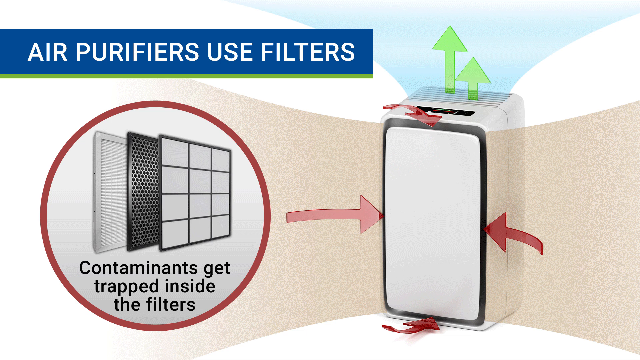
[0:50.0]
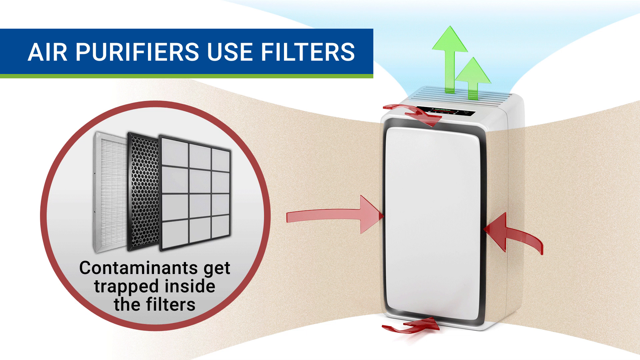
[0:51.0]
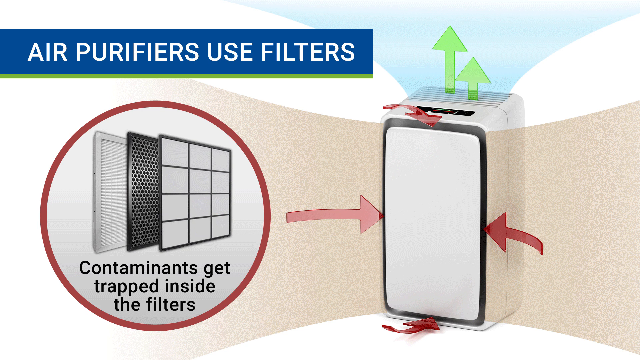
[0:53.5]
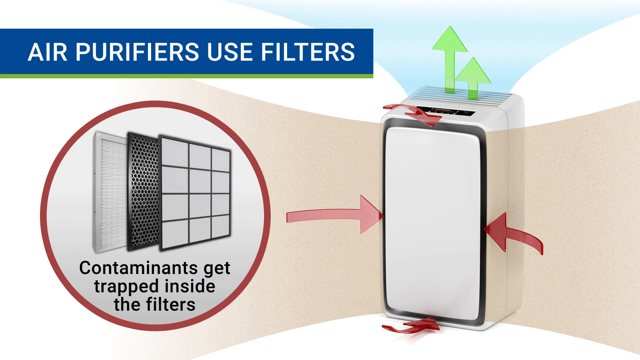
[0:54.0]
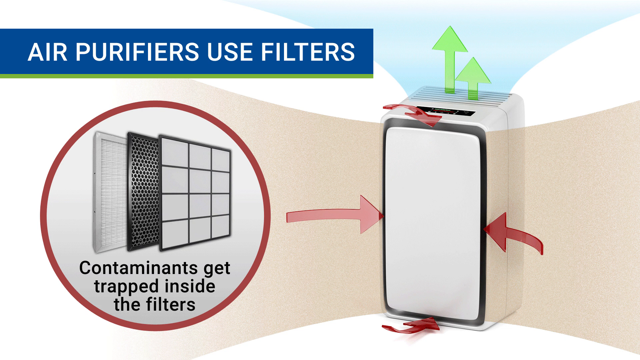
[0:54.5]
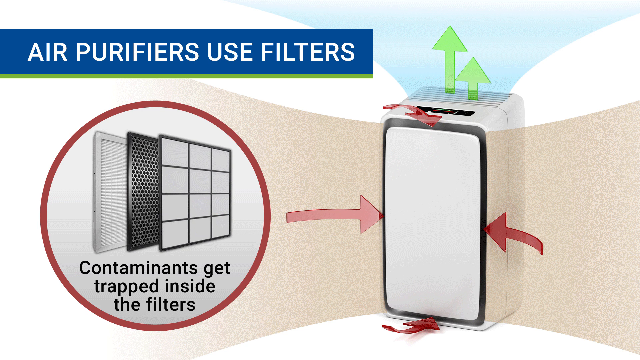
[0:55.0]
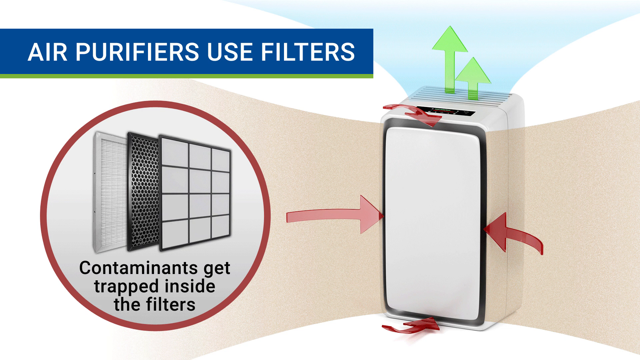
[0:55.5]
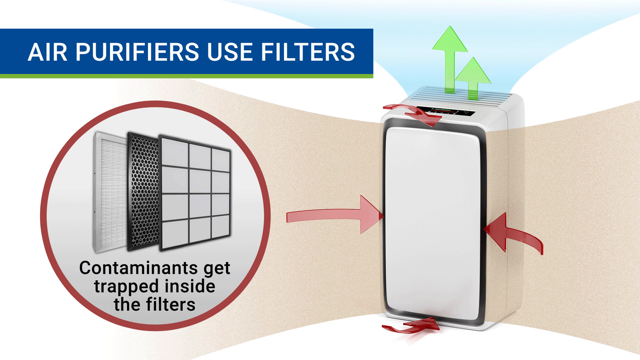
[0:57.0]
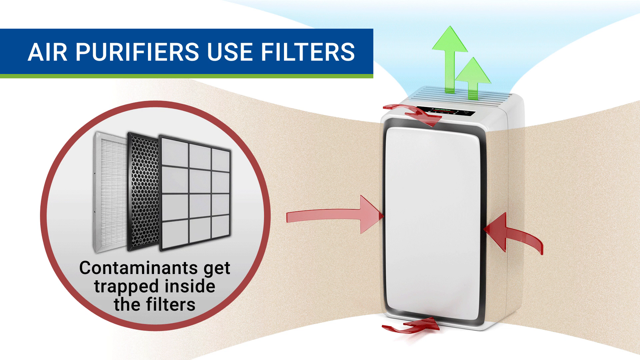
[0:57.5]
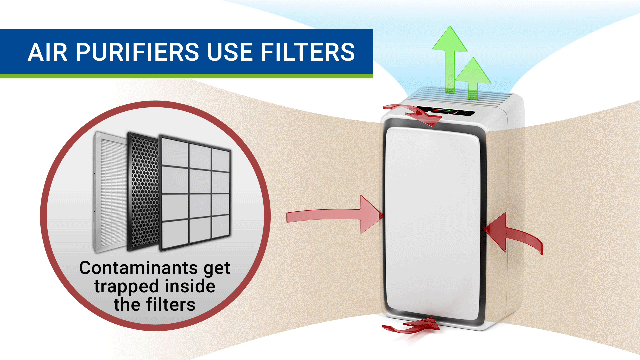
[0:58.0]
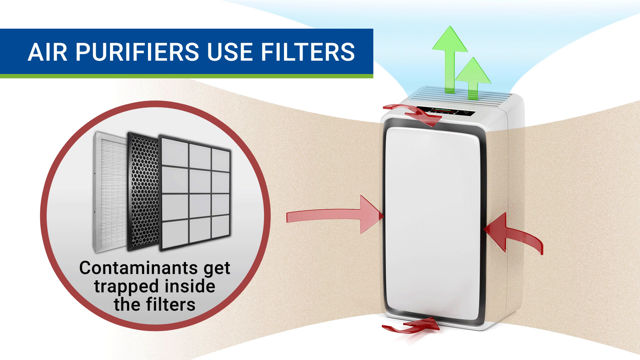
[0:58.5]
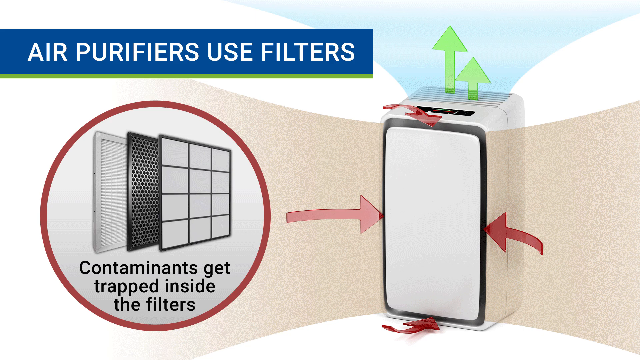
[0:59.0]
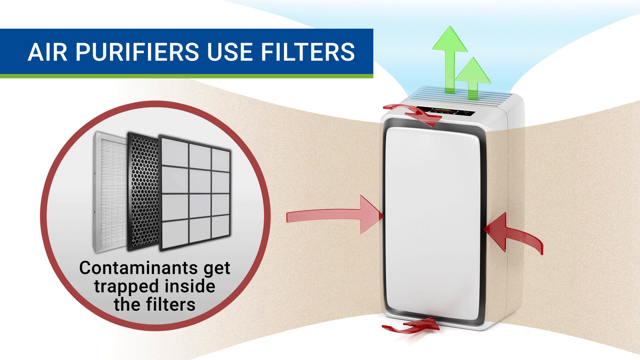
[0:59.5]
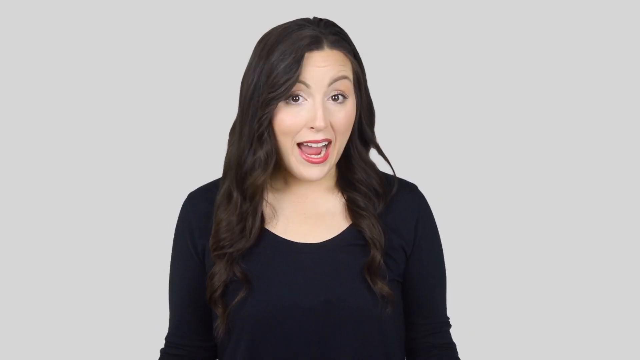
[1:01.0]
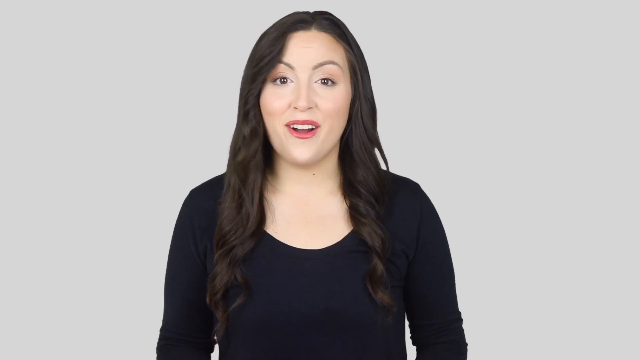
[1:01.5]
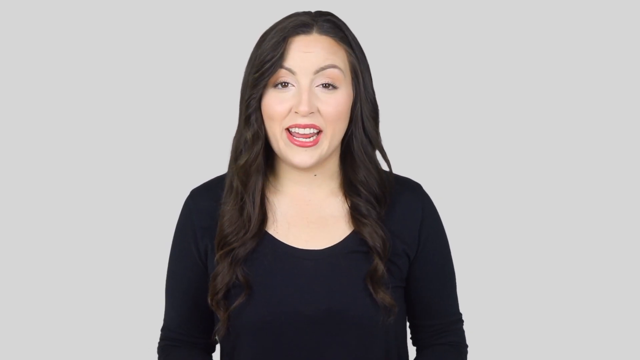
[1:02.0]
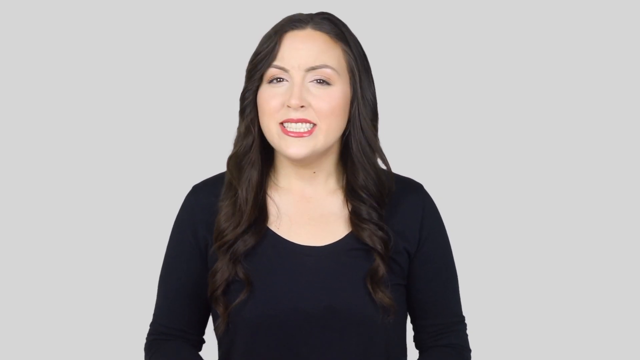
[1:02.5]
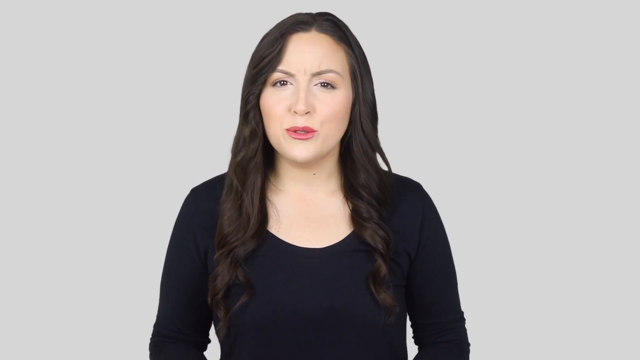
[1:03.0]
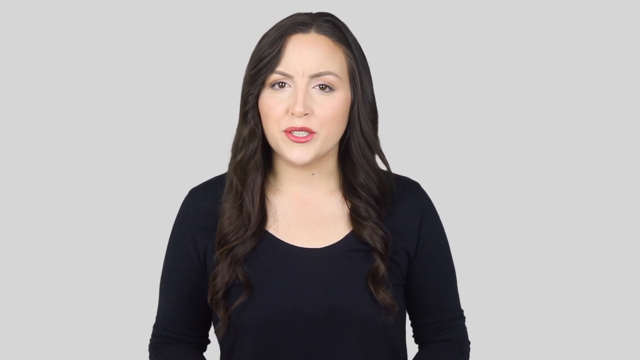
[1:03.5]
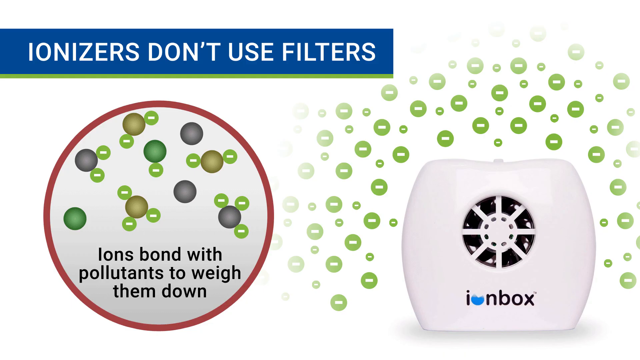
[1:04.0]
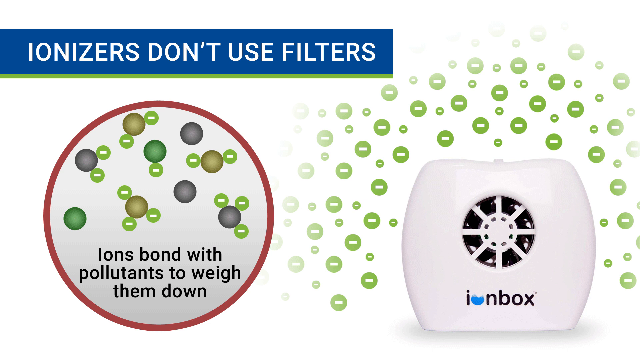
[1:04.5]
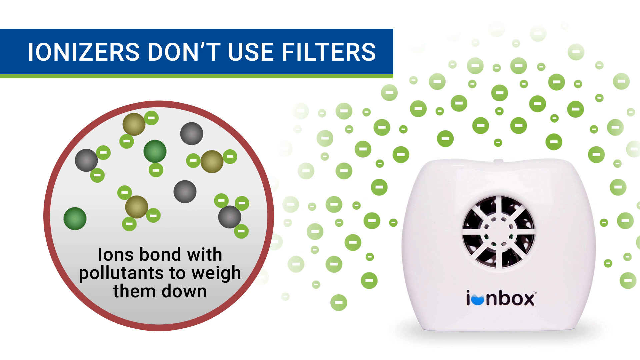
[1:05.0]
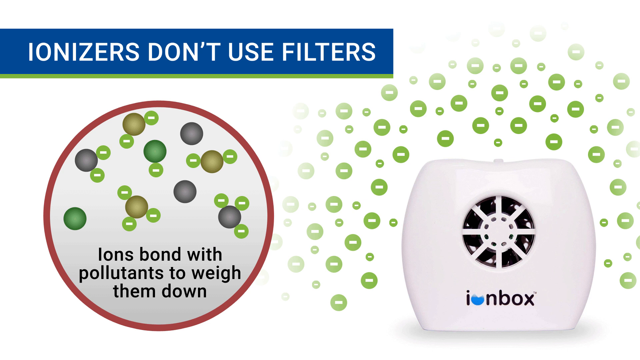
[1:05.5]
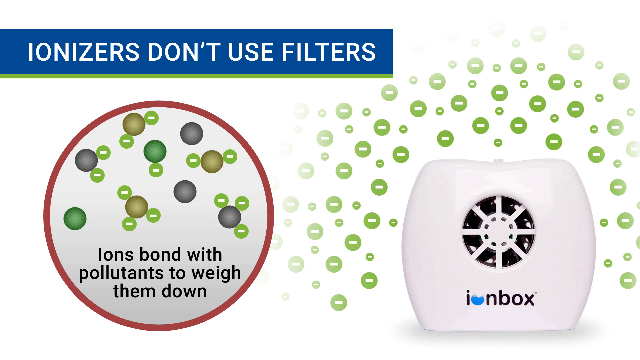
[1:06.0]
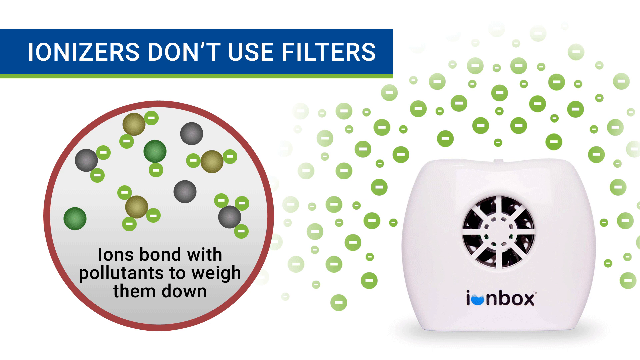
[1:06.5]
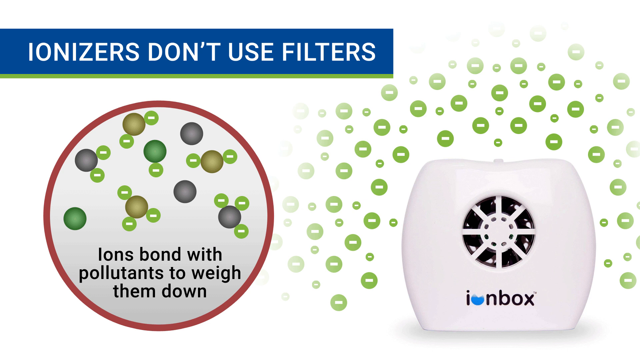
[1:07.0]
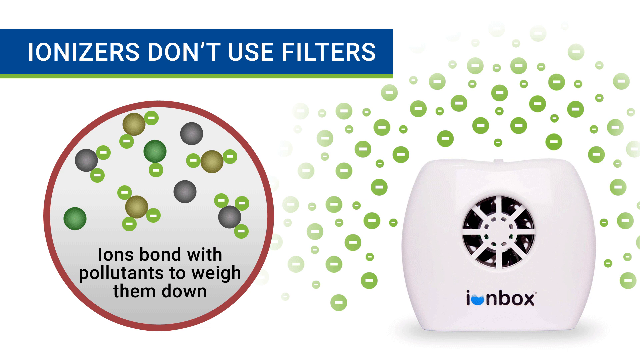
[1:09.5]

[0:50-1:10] A slide shows a blue rectangular header box in the top left corner with white text reading "Air purifiers use filters". Below it is a white circle with a red outline containing three square air filters, with black text underneath them reading "contaminants get trapped inside the air filters". To the right of the circle is a tall, white, rectangular air purifier with vents at the top and two green arrows coming from it pointing up. Its front is a flat white surface, with red arrows pointing to it from the left and right sides and from above and below. The screen then changes to a woman with long dark brown hair curled at the ends, standing in front of a light gray background and speaking to the camera. She wears a black long-sleeve shirt and minimal makeup, just a little eyeshadow and a darker pink lipstick; as she speaks she smiles, her eyes open wide and her eyebrows are raised, and she looks happy and expressive. The next slide has a blue header box at the top left reading "Ionizers don't use filters". Below it on the left is a light gray circle with a thin red border, inside which gray, green and tan balls seem to float around, along with scattered light green circles that have a white dashed line inside them. Toward the bottom of the circle, black text reads "ions bond with pollutants to weigh them down". To the right is a small, white, rounded-square air purifier with a vent on the front that looks like a circular fan and the text "ion box" on the bottom. All around the background surrounding it are more light green circles with a white dashed line in them, some bigger and some smaller.